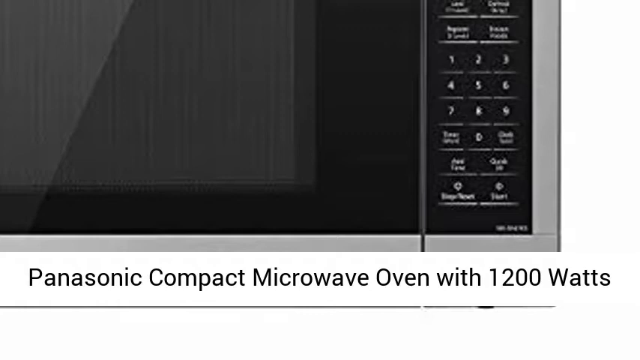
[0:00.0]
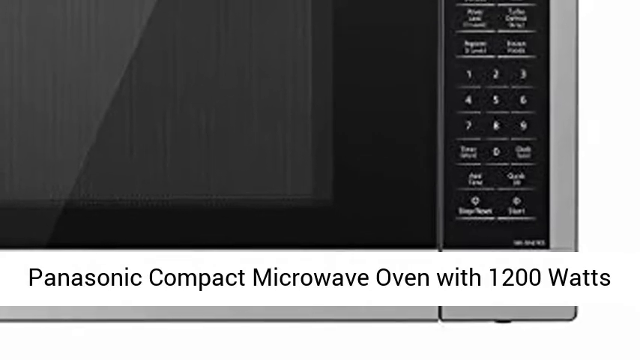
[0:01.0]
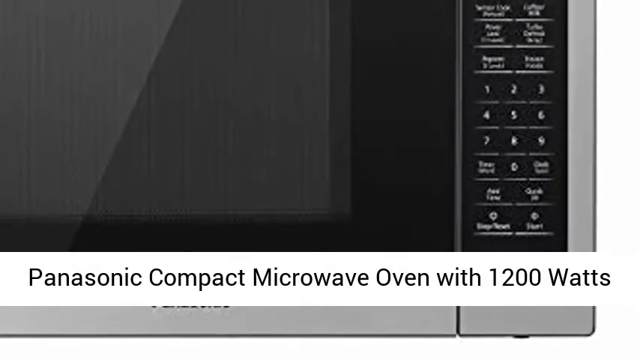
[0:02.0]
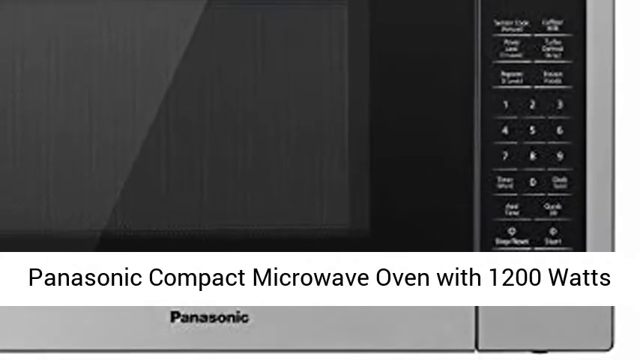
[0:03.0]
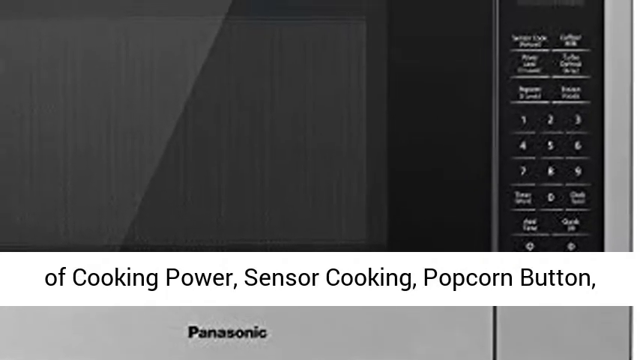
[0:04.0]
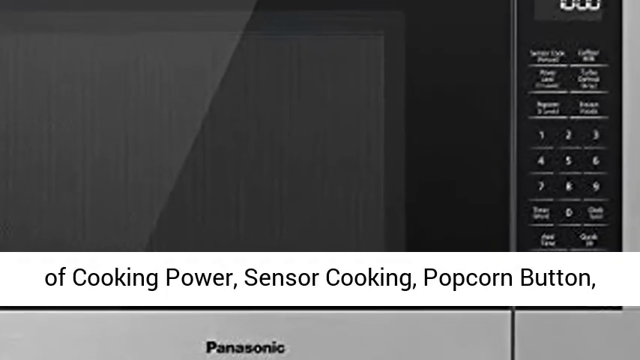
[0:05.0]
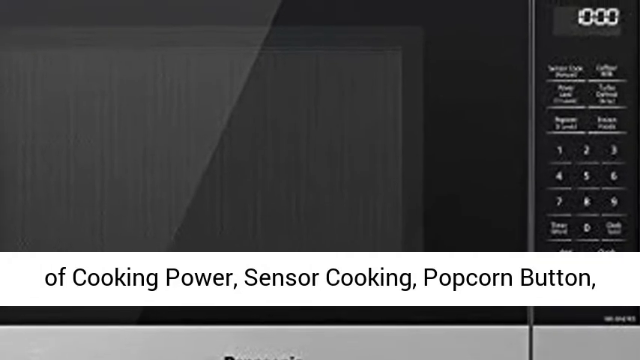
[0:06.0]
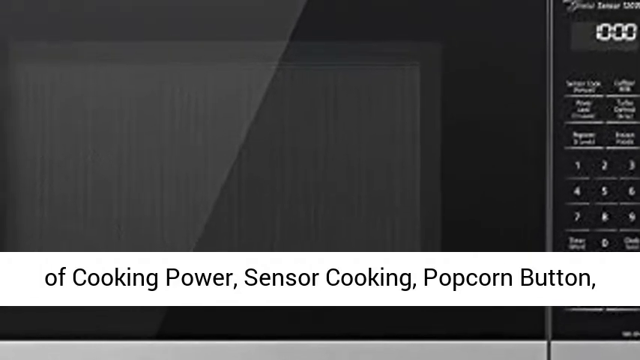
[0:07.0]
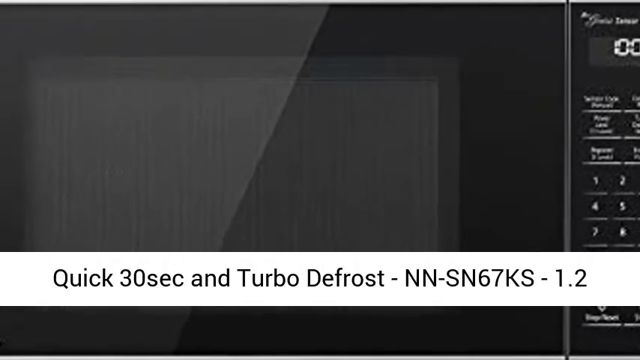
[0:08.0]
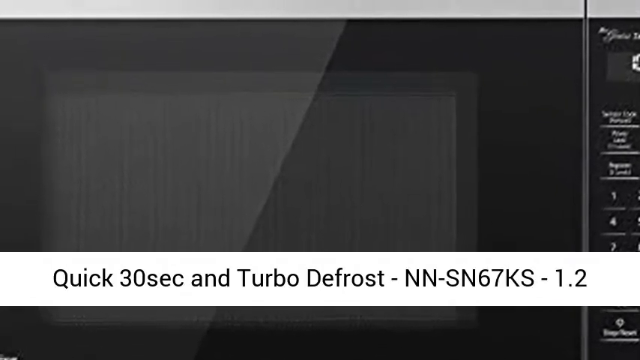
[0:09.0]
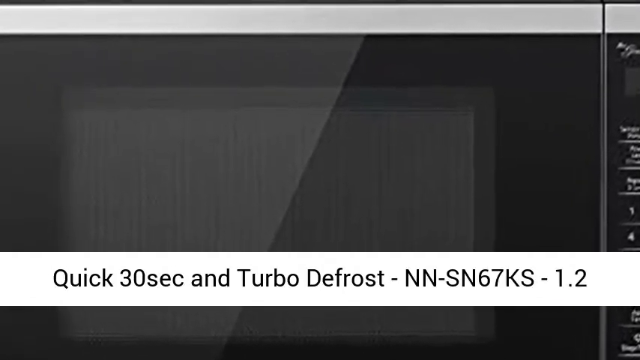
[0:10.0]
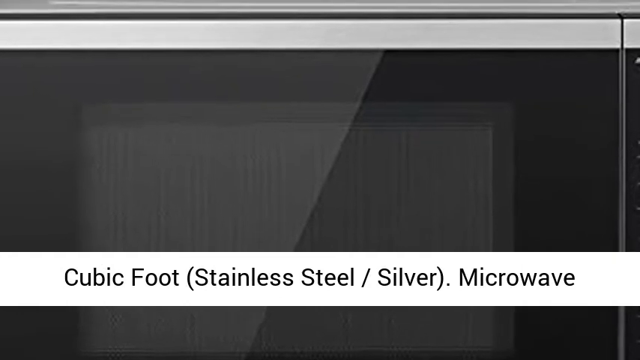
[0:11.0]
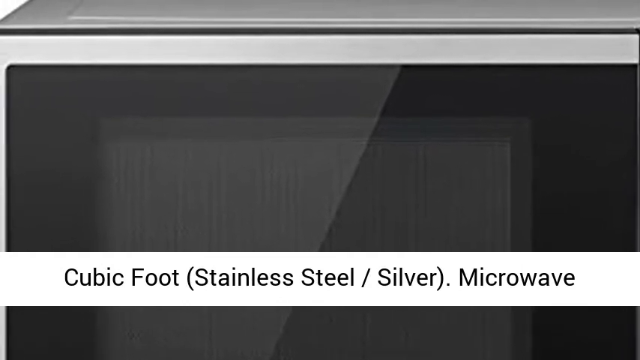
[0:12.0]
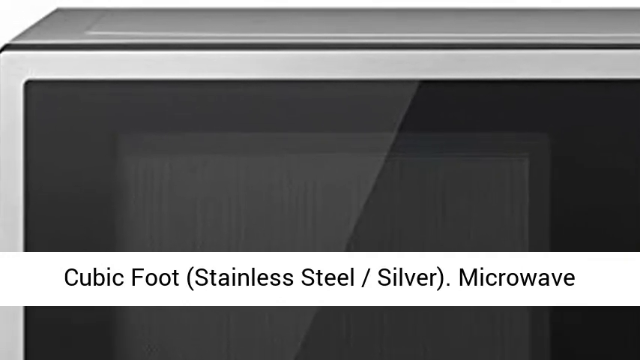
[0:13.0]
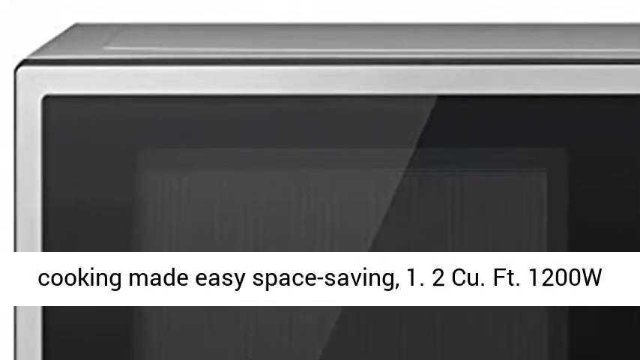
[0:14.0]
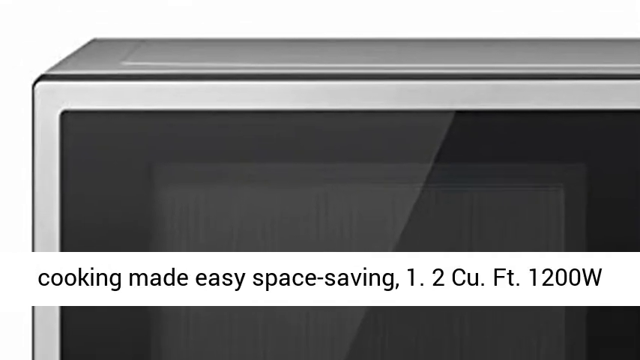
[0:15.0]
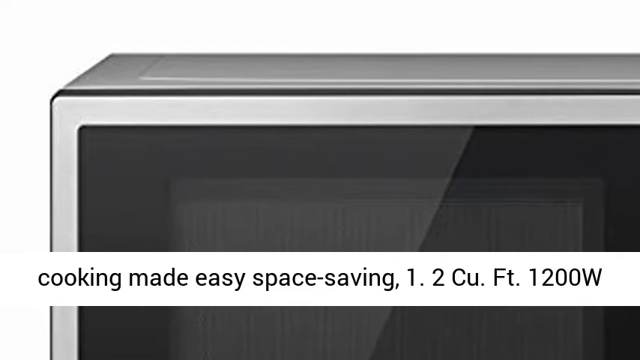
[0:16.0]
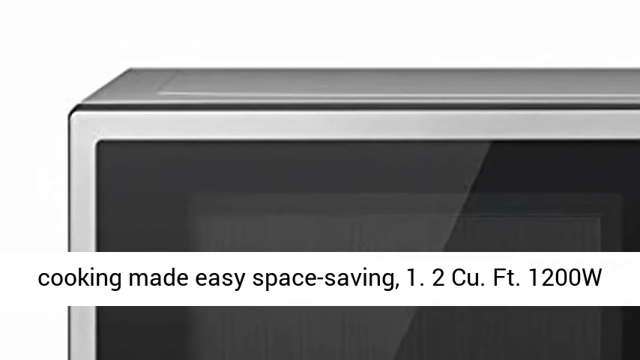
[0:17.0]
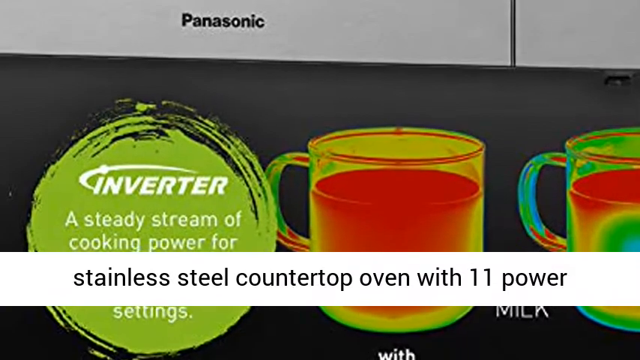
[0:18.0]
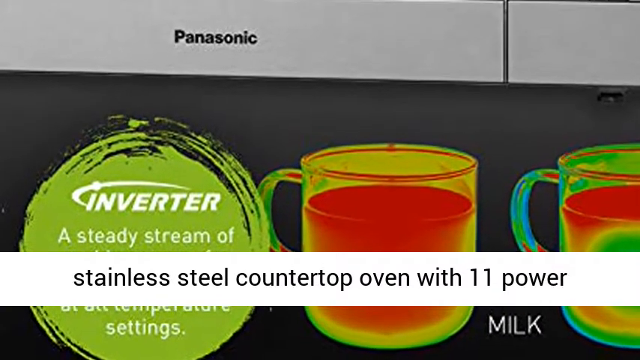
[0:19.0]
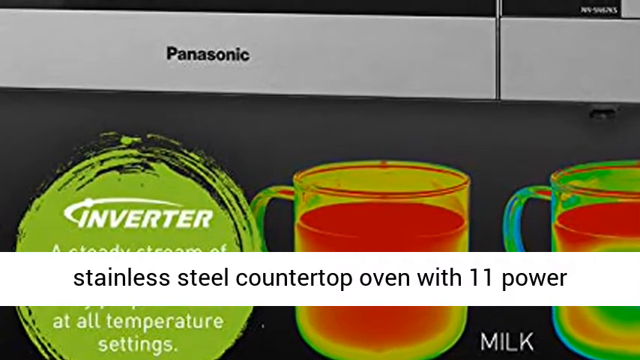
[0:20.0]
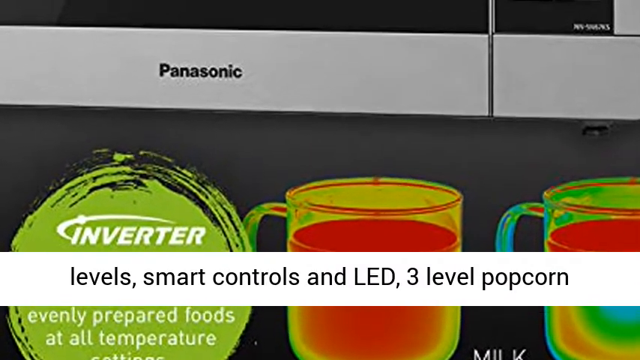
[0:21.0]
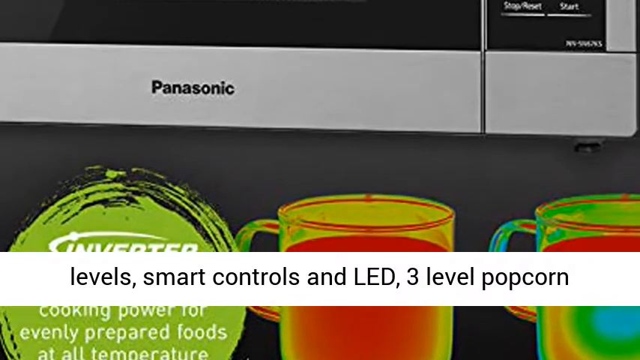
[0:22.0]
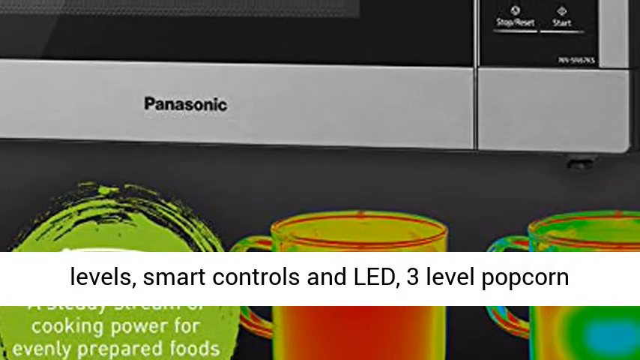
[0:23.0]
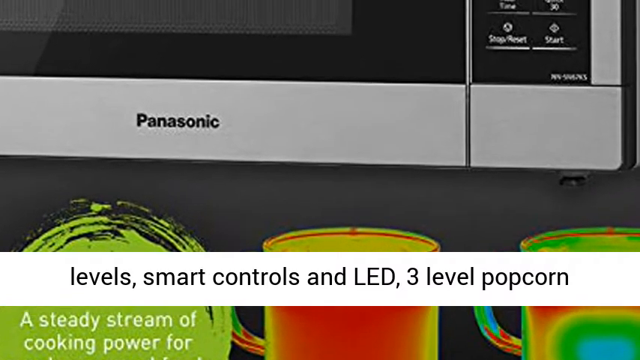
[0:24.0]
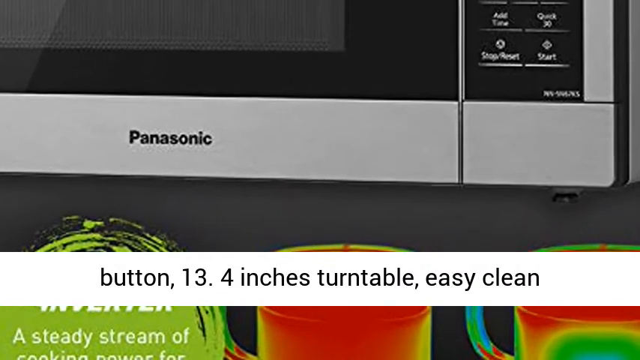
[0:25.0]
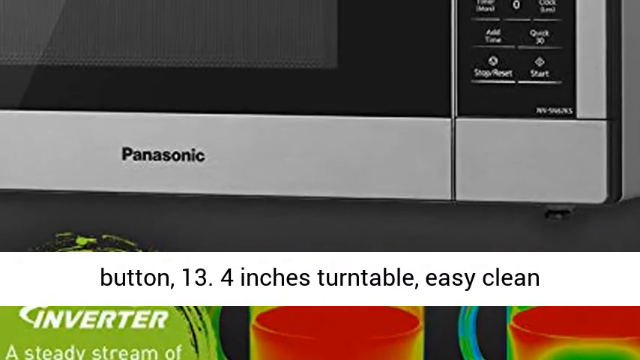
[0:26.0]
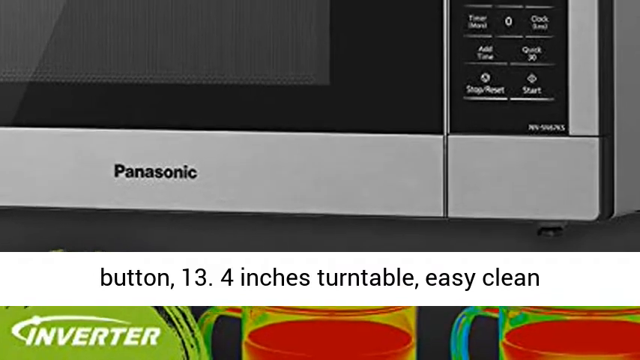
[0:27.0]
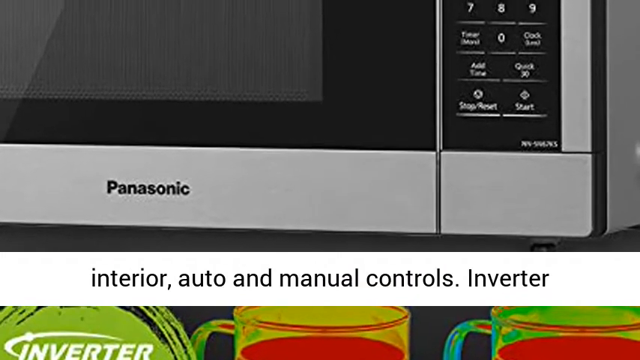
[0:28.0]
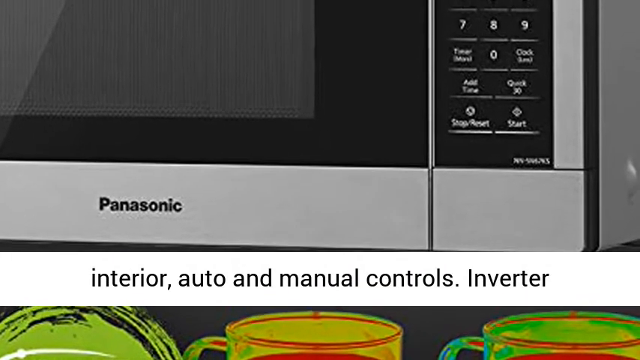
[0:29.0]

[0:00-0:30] The video opens on a Panasonic compact microwave oven with 1200 watts. The microwave has a silver periphery, almost chrome looking, and a black body. "Panasonic" is written at the bottom in black. The buttons are black with white lettering. The window in the middle is clear, with black around it. Text on the screen reads "of Cooking Power Sensor Cooking Butter Popcorn Quick 30-second and Turbo Defrost NN-SN67KS-1.2. cubic foot, stainless steel, silver, microwave. Microwave cooking made easy, space-saving, 1.2 cubic foot, 1200 watt. Stainless Steel Countertop Oven with 11 Power Levels, Smart Controls, and LED", followed by text about a level 3 popcorn button, a "13.4 inches turntable, easy clean interior, auto and manual controls."